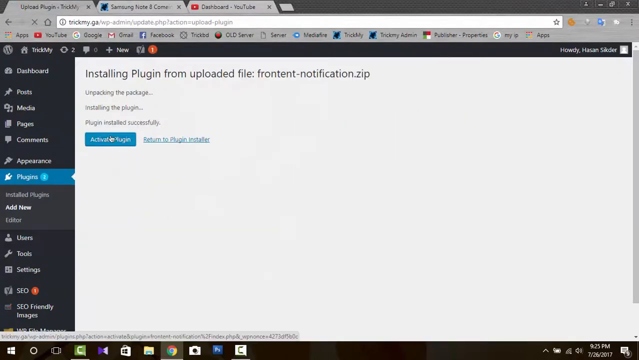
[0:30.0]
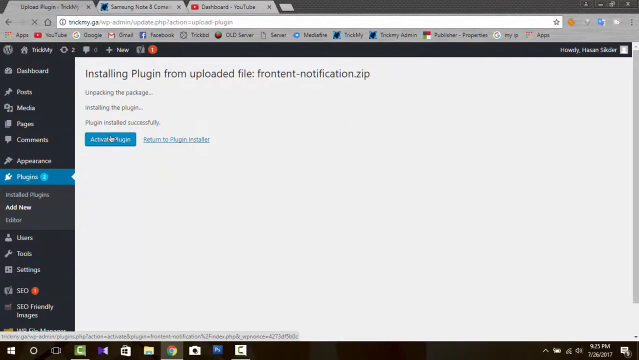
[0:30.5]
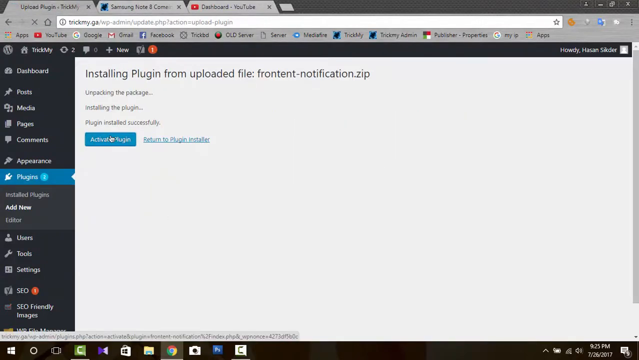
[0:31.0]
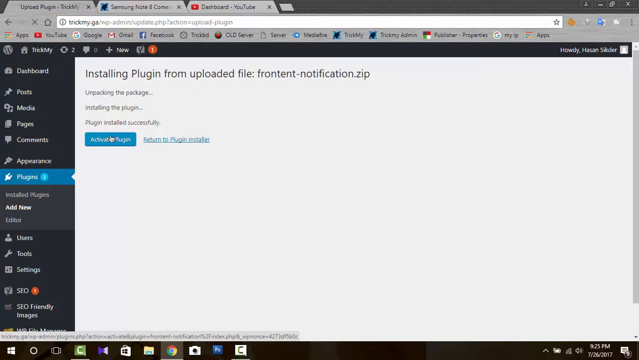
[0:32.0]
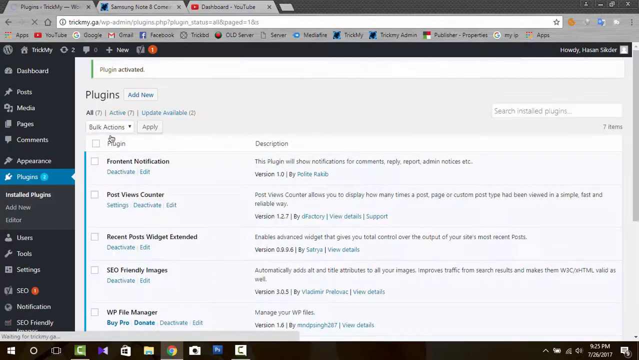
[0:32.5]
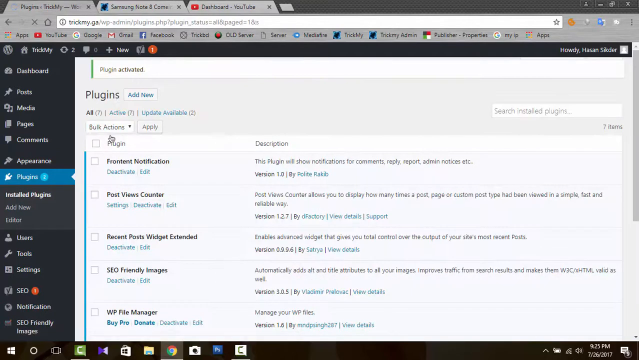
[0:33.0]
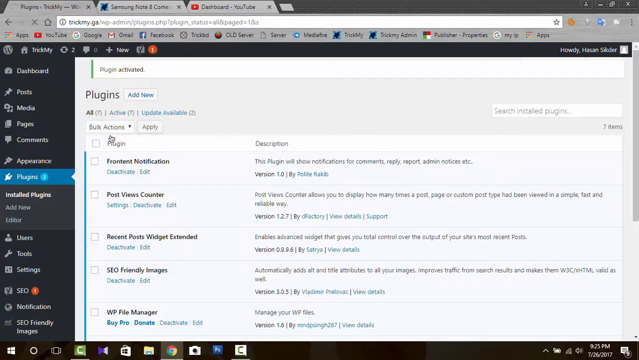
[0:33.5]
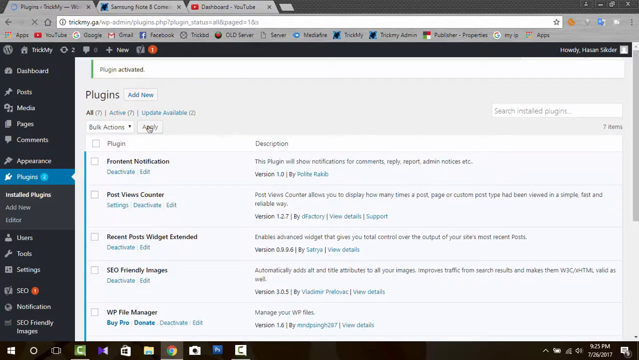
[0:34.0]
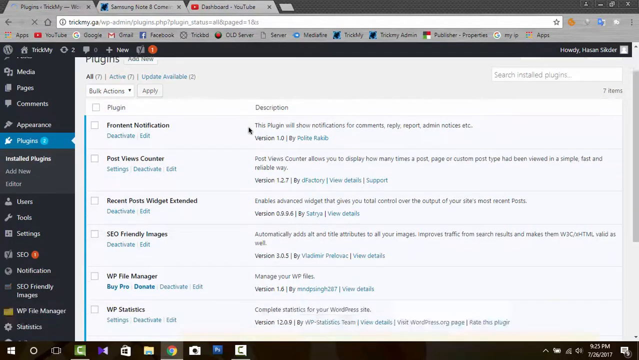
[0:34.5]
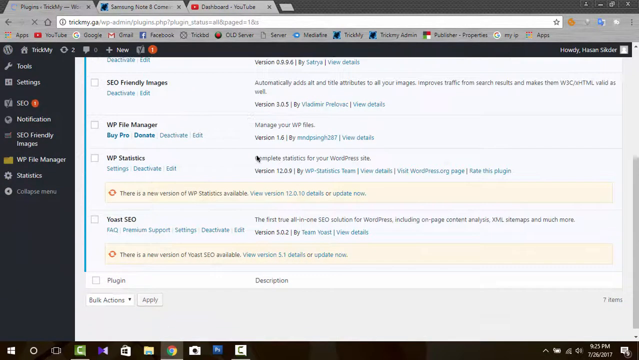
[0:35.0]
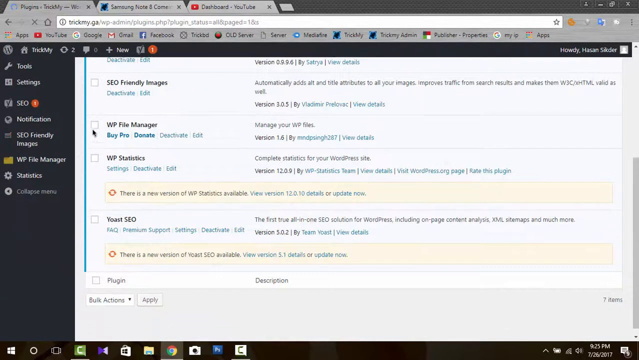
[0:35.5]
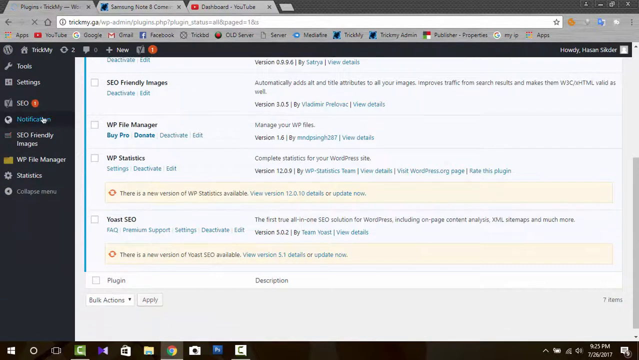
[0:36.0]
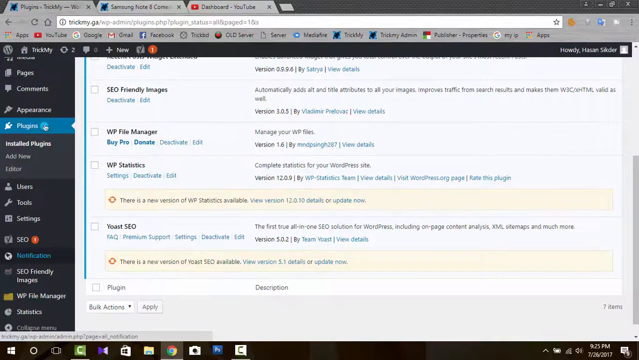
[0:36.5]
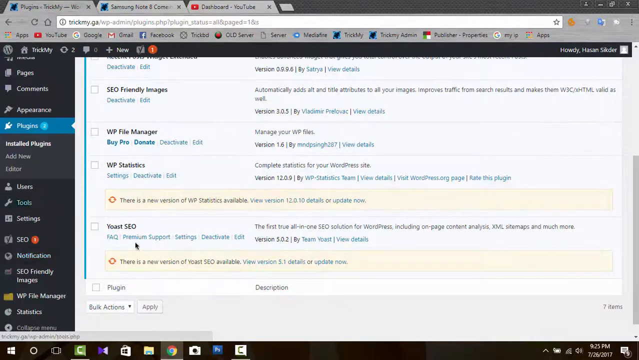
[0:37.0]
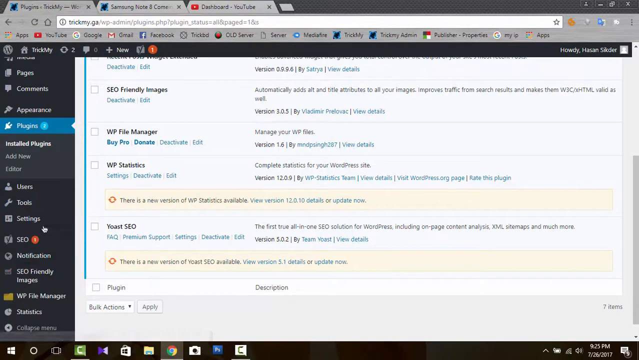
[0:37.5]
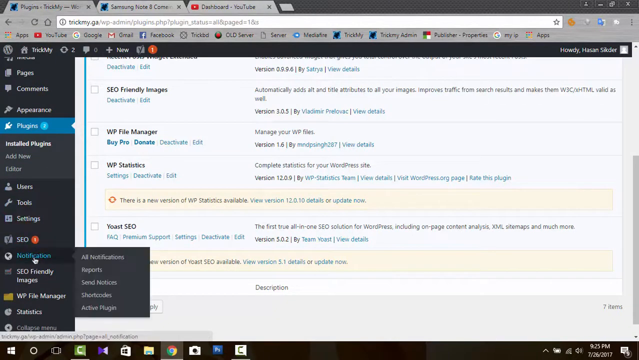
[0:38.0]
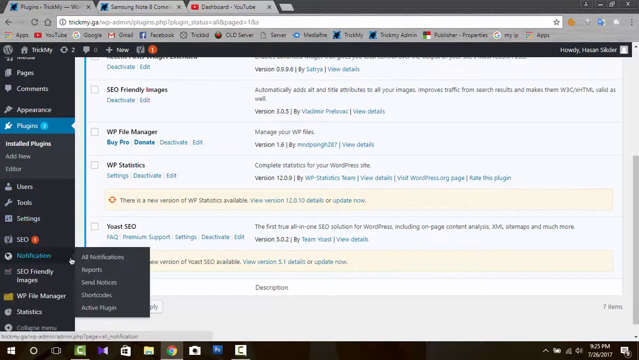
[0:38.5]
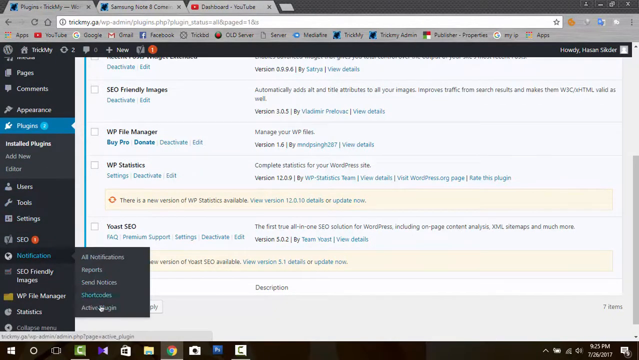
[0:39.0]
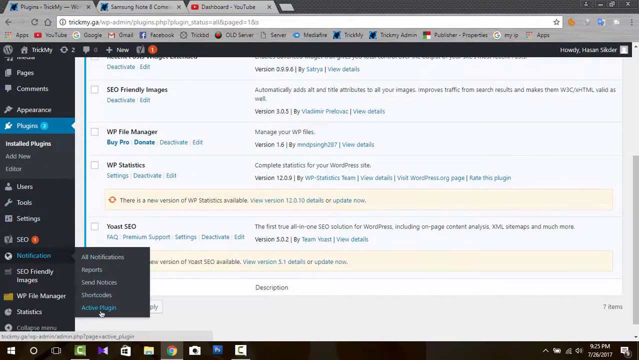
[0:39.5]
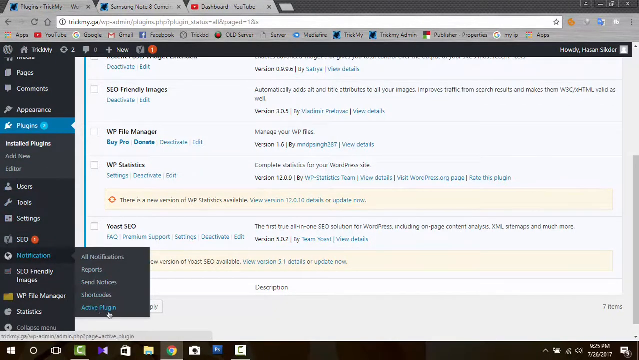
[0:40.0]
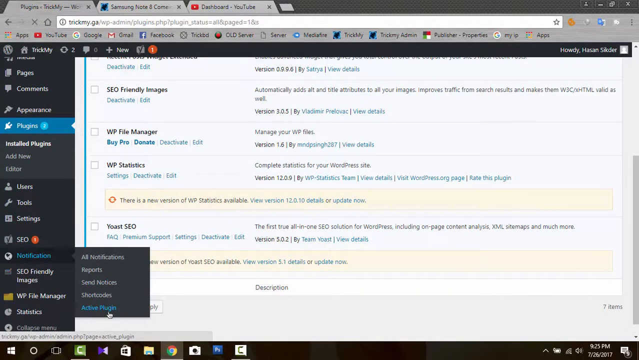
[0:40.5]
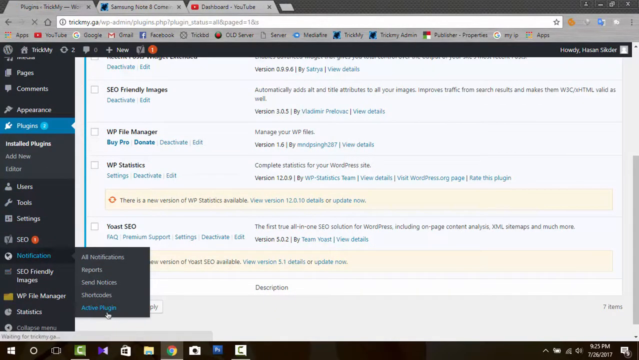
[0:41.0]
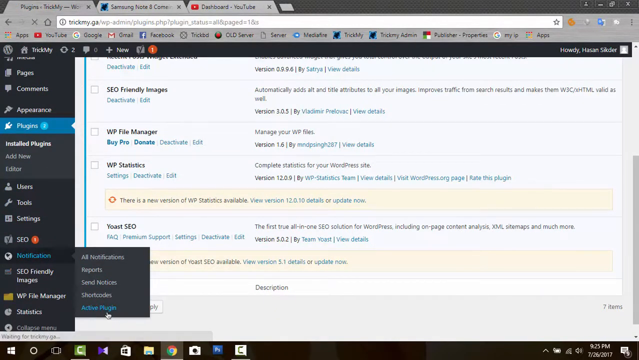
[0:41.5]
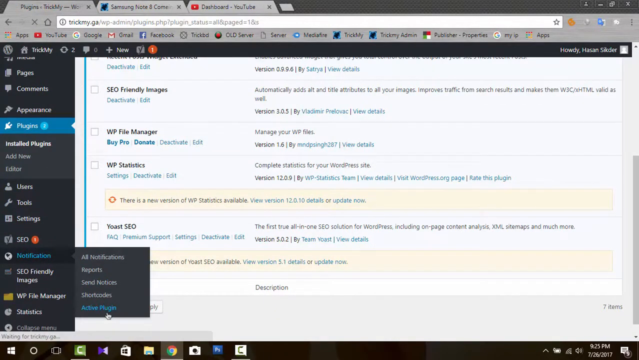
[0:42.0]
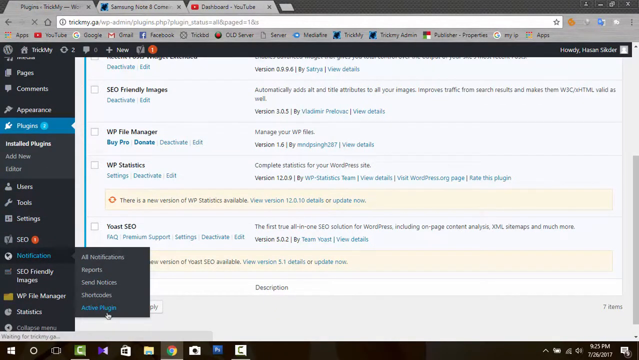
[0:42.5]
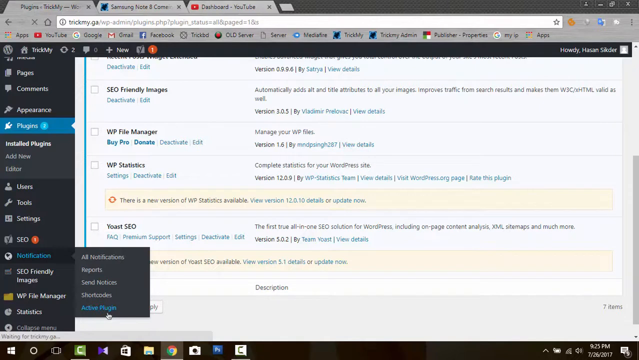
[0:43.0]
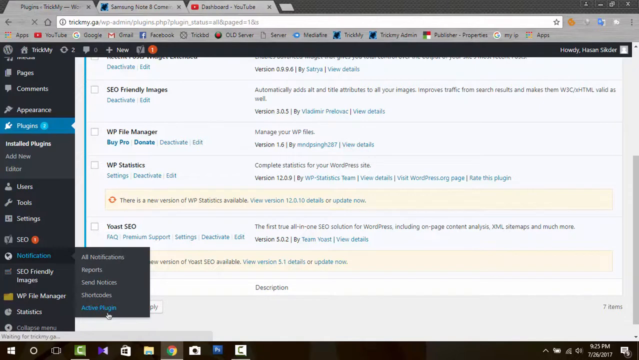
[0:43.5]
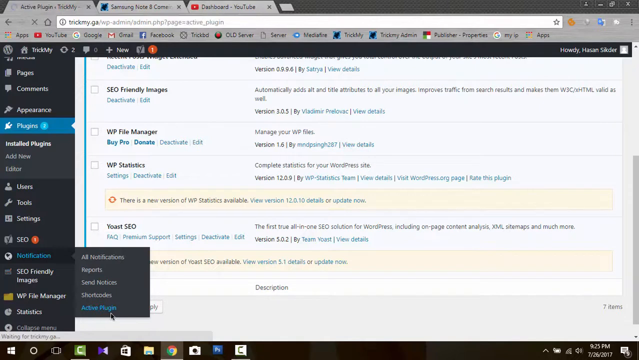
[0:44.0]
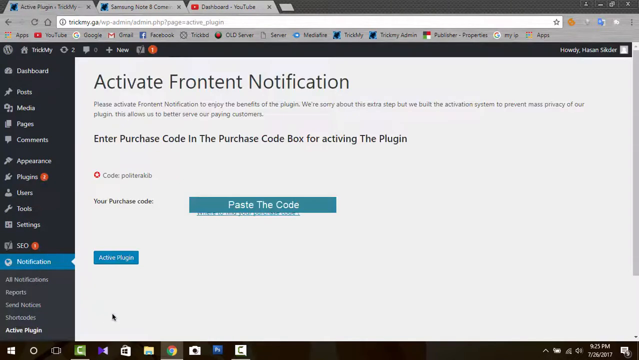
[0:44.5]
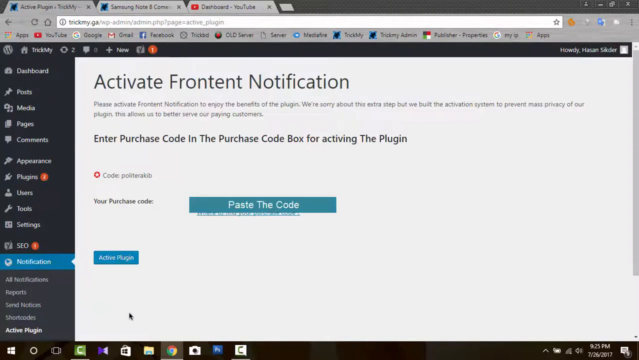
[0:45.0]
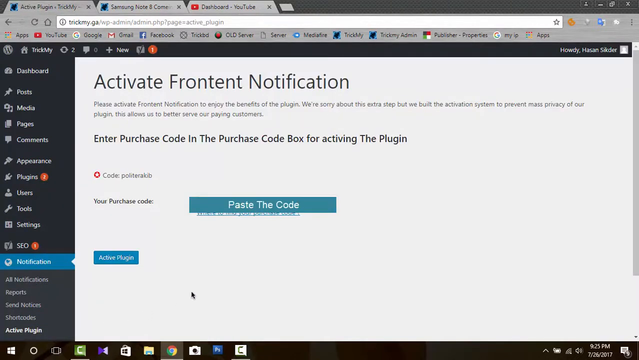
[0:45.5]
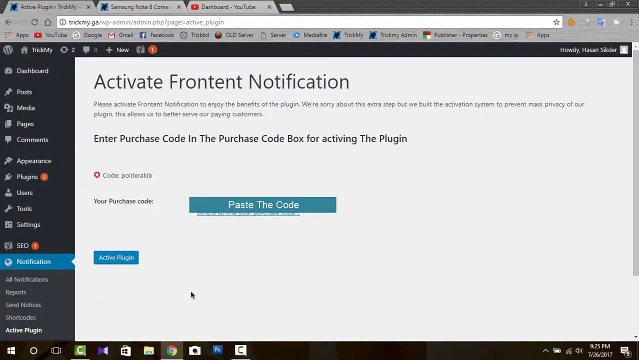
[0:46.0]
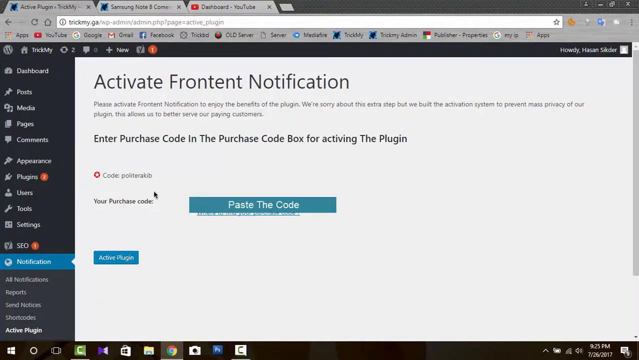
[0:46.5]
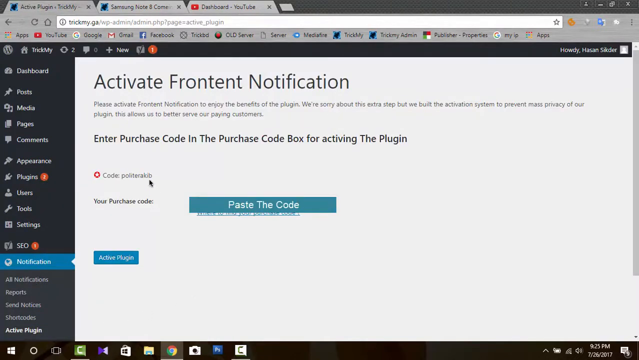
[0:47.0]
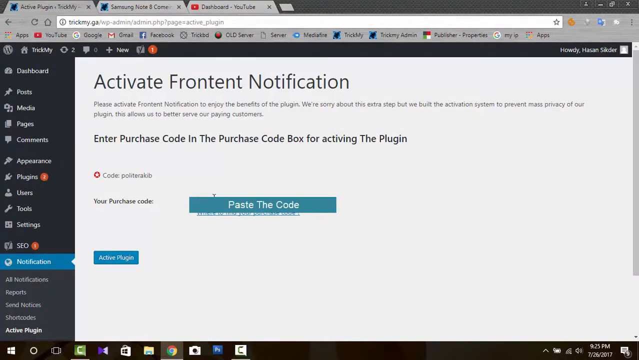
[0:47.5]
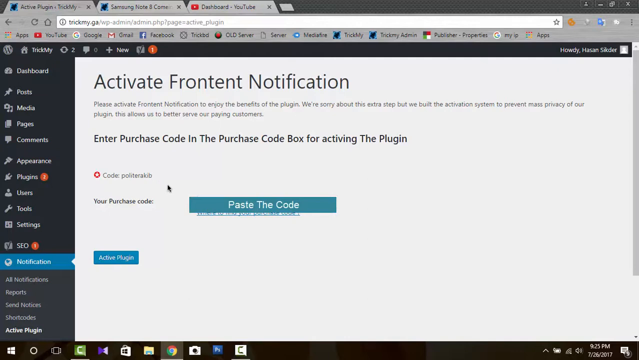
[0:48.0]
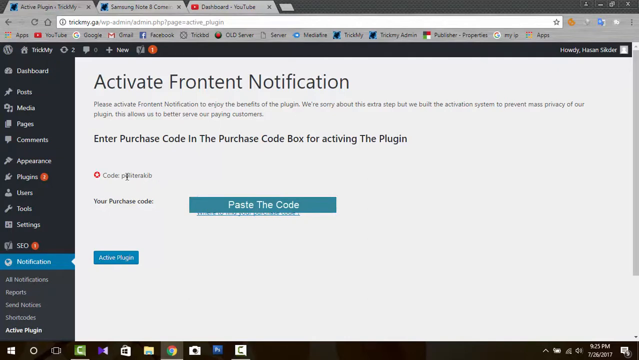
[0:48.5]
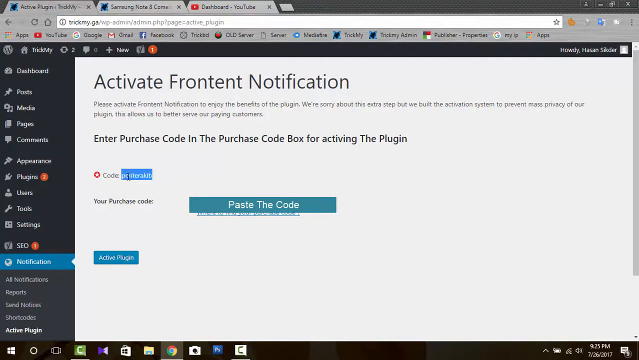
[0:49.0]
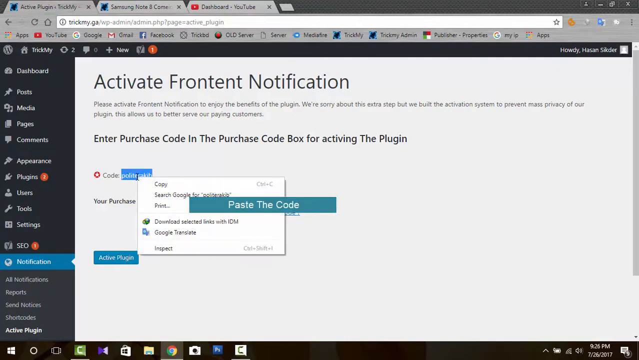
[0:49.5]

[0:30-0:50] With the window open, the user selects a button and scrolls down, selects the plugin option on the left side, then the notification option at the bottom, and clicks a button that says "activate plugin". A page opens with text at the top that begins "activate". The cursor moves to the left, and the user copies a code that reads "politerakib". Another window opens, and the user selects the copy option; the copied text apparently is the name of a plugin.